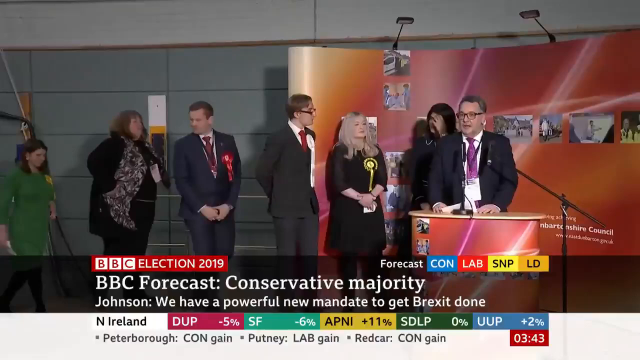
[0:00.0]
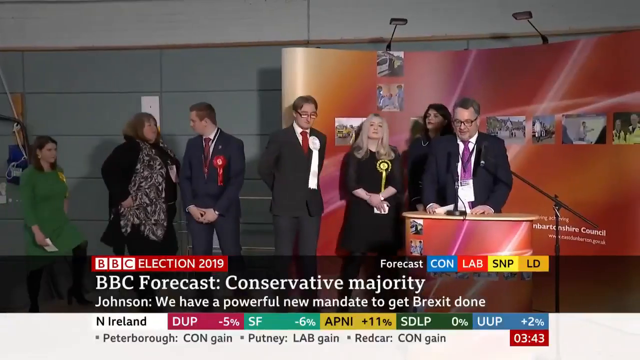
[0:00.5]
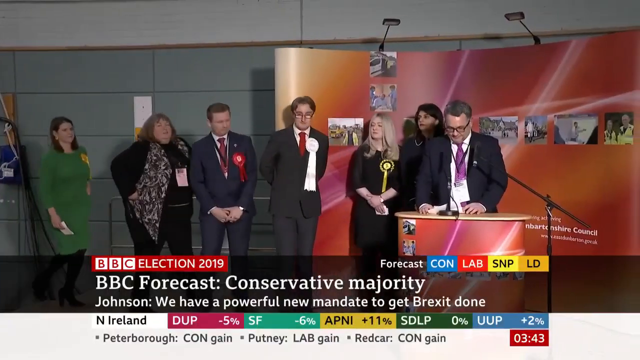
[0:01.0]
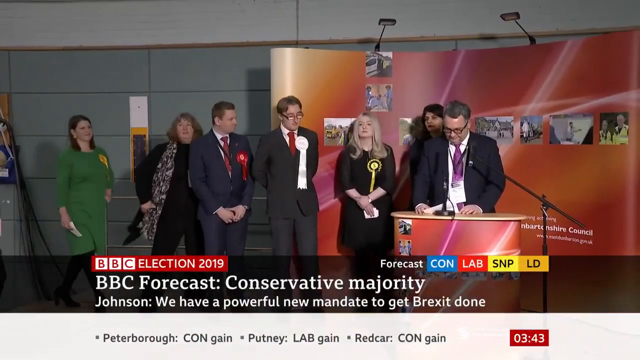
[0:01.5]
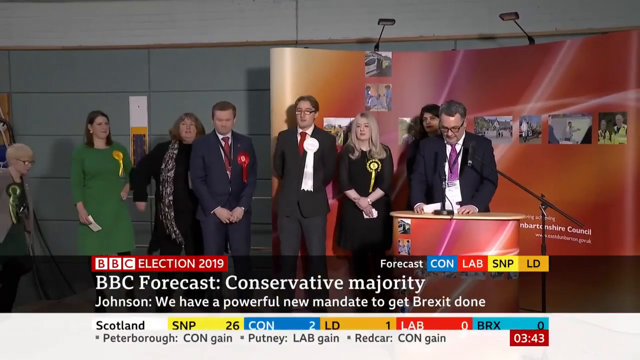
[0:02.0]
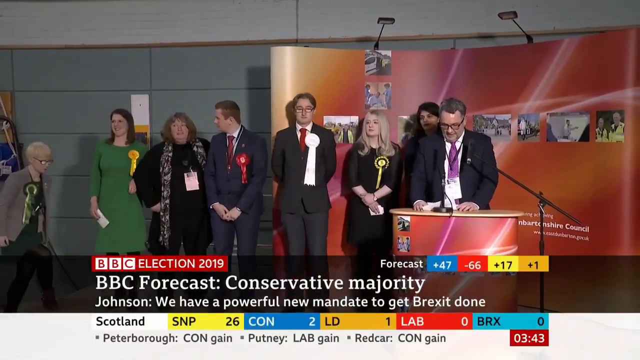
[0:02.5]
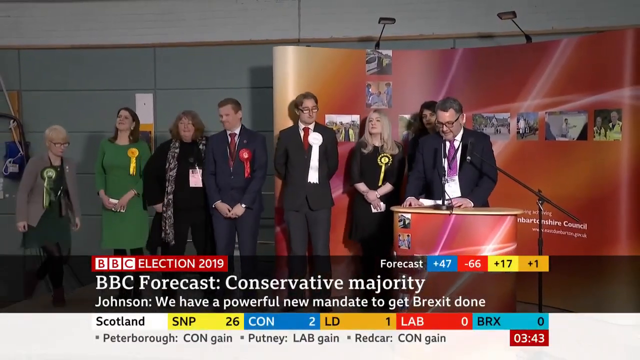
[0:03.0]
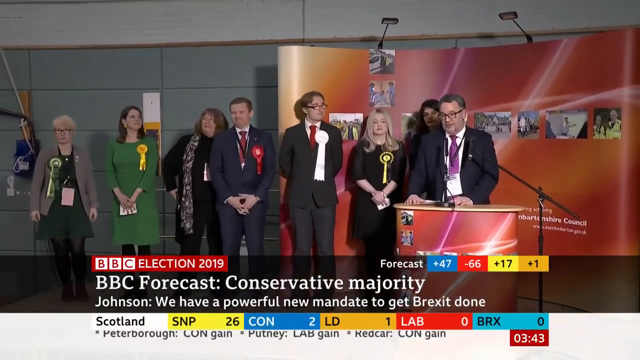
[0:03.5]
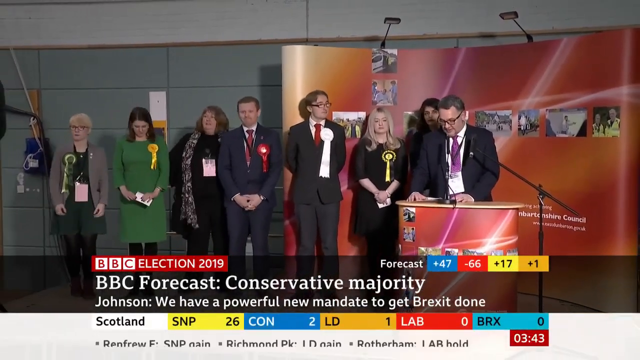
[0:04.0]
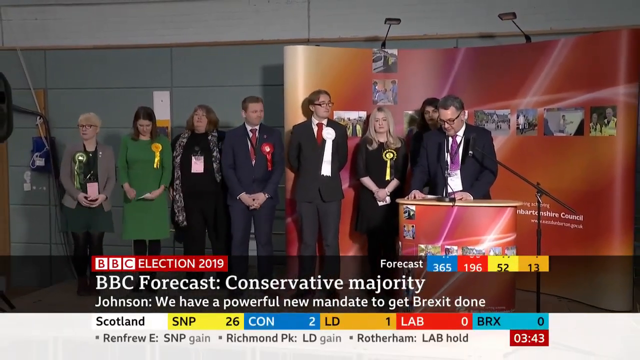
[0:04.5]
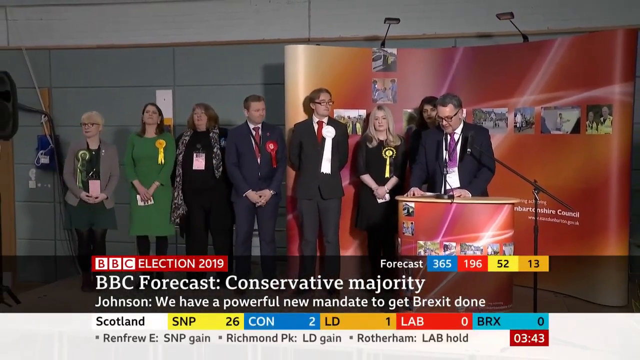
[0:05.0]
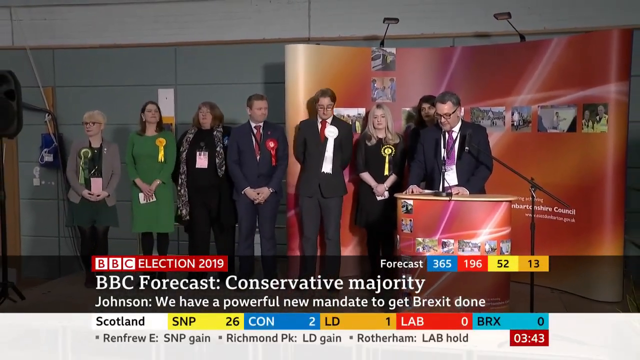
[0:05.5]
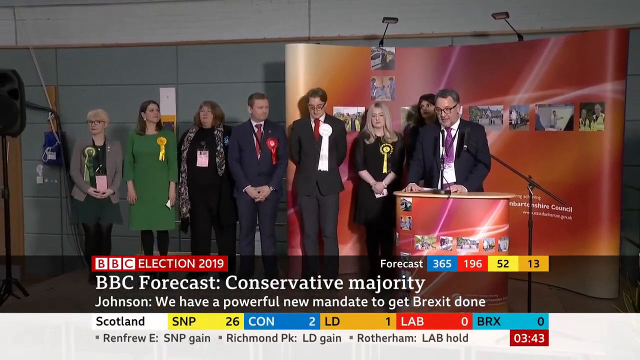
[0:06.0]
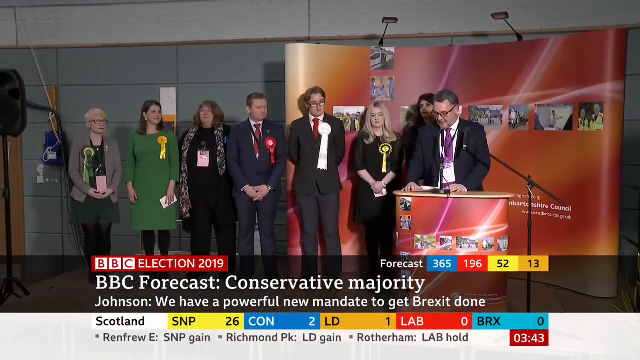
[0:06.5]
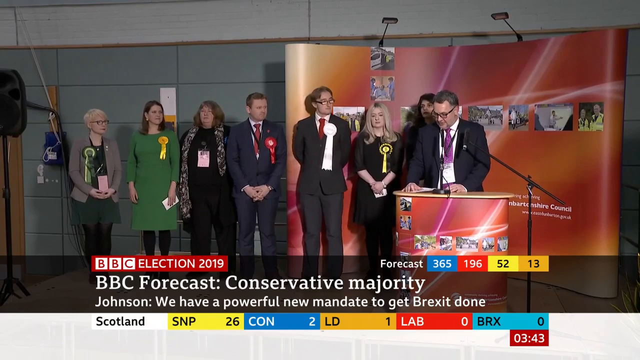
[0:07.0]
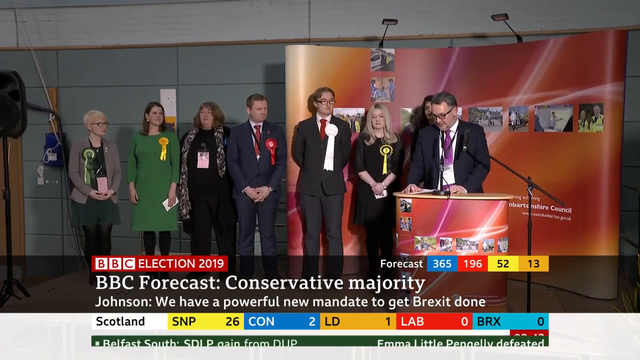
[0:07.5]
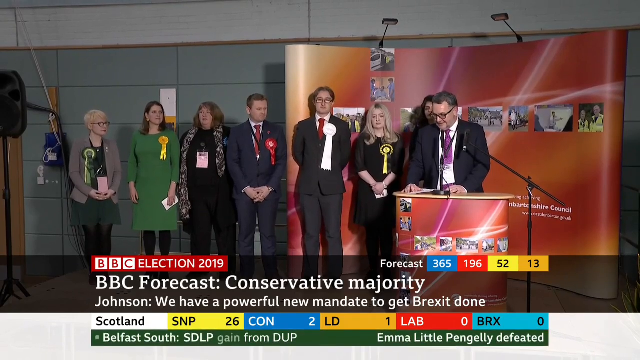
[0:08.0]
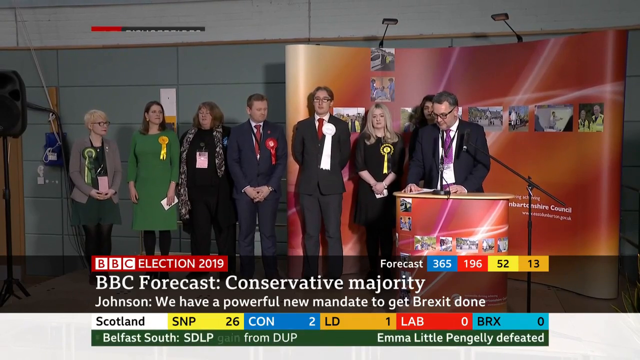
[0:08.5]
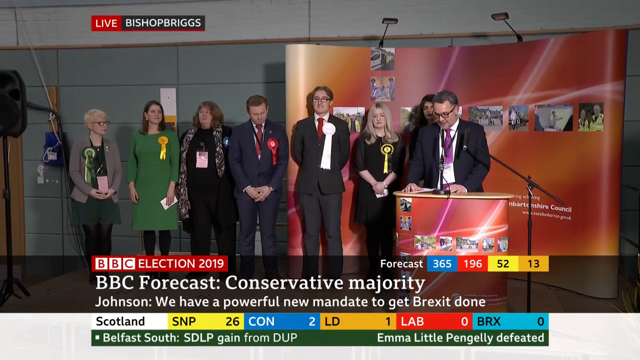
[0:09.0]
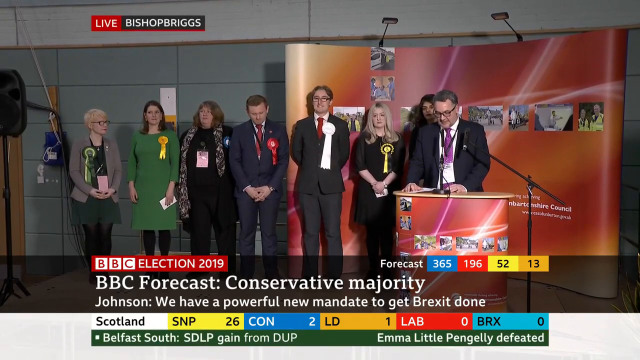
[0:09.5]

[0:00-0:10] A screenshot of what is probably a TV or computer program is shown. Text at the top reads "BBC election 2019"; beneath it, "BBC forecast conservative party"; and beneath that, "Johnson, we have the powerful mandate to get Brexit done." Seven people are standing on a stage. On the far left is a woman in a green dress. Next is a woman in an all-black outfit with a large black and white or light gray scarf. Next is a man in a blue suit with a maroon tie and a light pink shirt, wearing a red ribbon on his left front. To his right is a man in a black suit, white shirt and red tie, with a white ribbon. A blonde woman in black wears what looks like a yellow ribbon on her lapel. A woman standing in the background wears black, with no ribbon visible. A man standing at the podium wears a black suit, purple tie and white shirt, also with no ribbon. Another woman then moves up onto the stage, wearing a beige jacket, a green shirt and a green and beige ribbon.